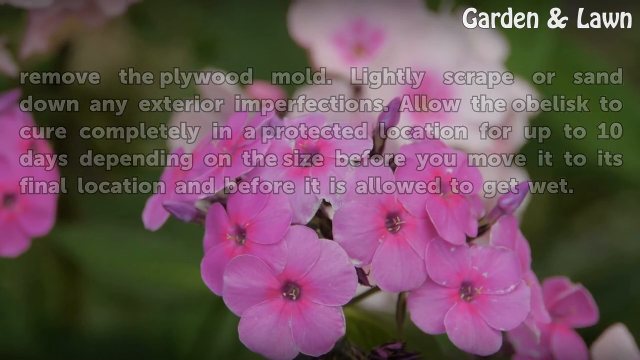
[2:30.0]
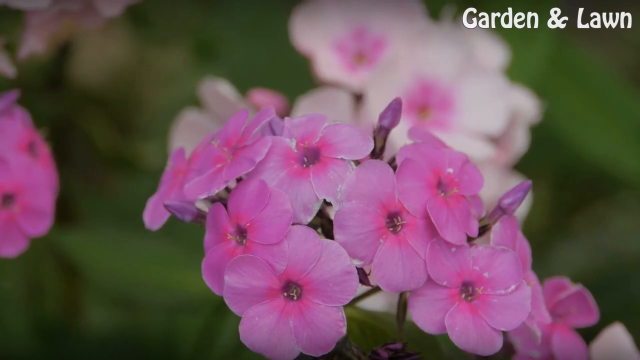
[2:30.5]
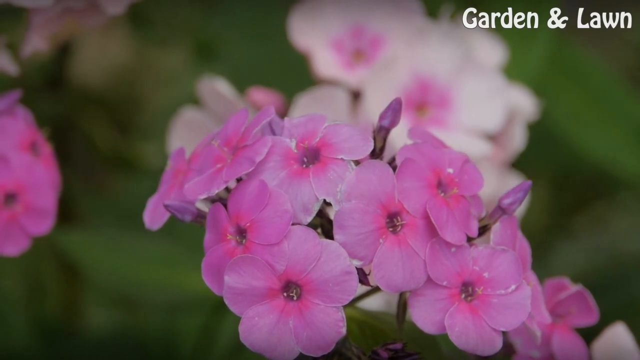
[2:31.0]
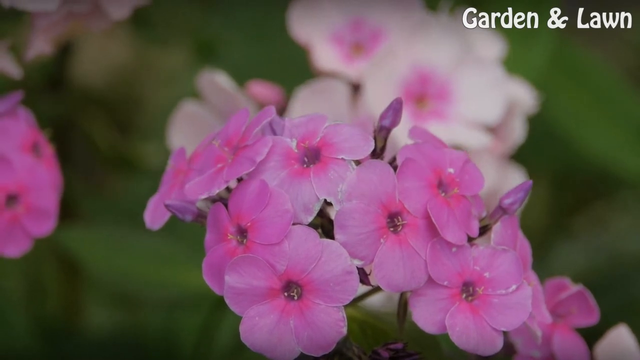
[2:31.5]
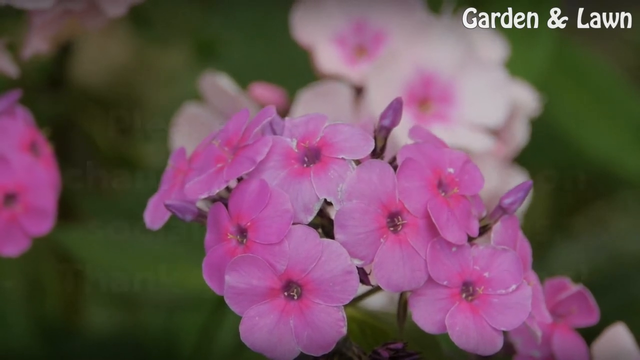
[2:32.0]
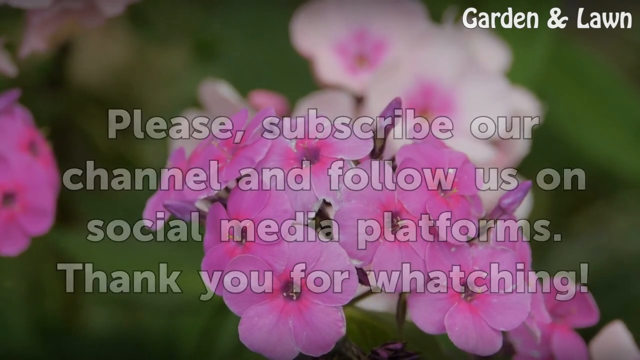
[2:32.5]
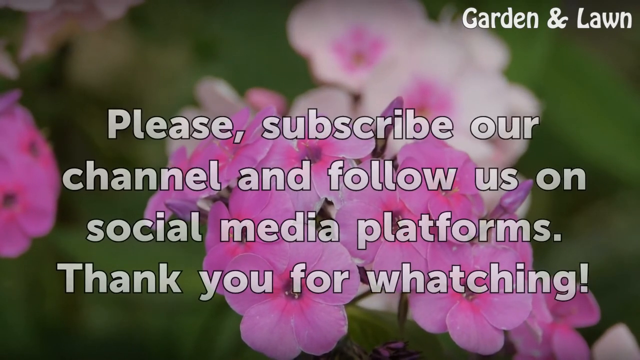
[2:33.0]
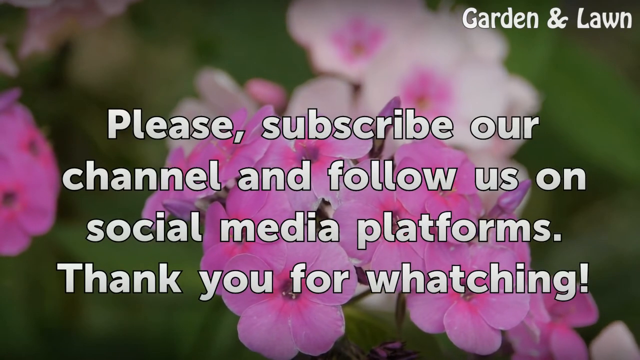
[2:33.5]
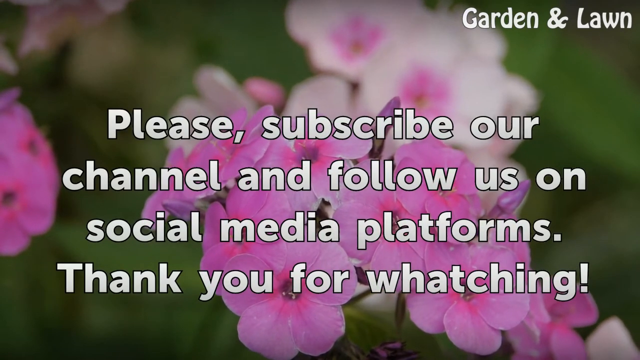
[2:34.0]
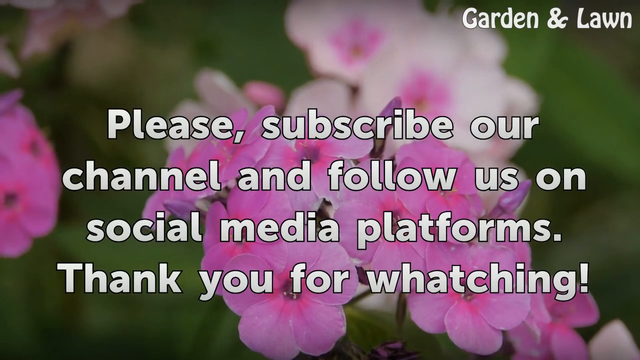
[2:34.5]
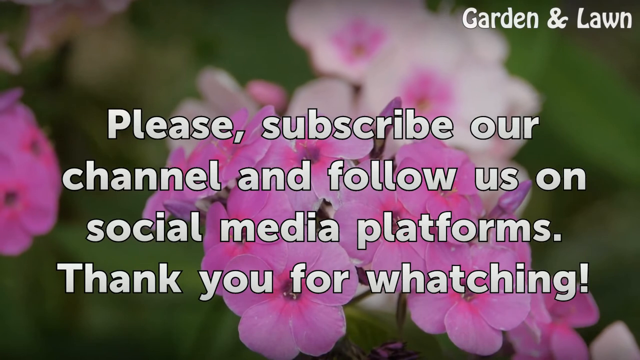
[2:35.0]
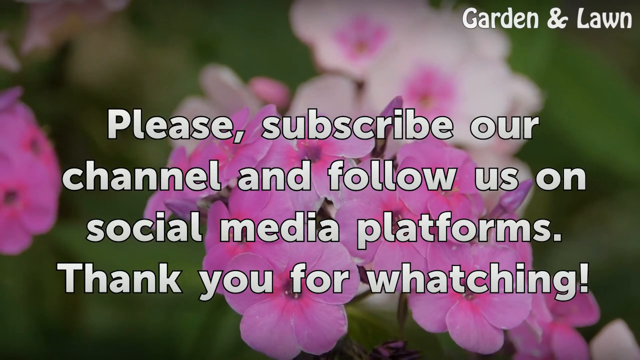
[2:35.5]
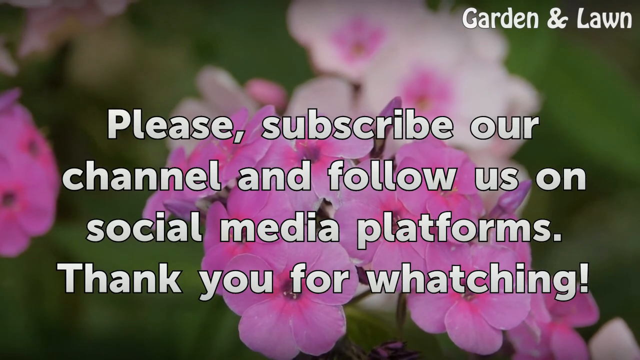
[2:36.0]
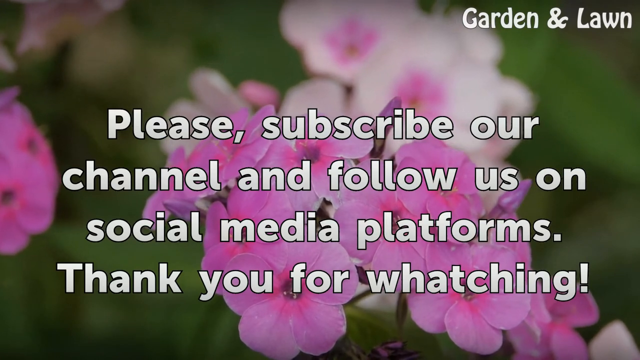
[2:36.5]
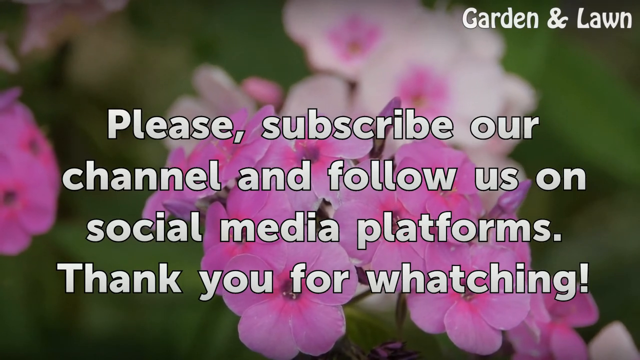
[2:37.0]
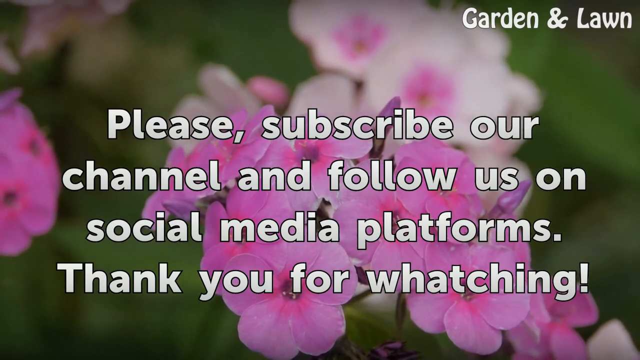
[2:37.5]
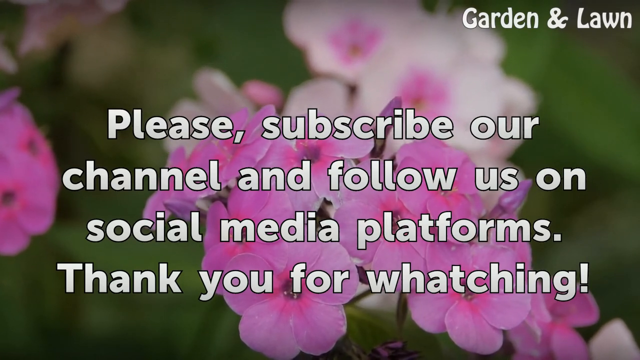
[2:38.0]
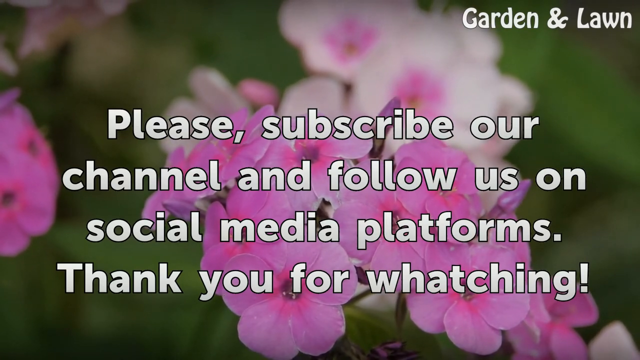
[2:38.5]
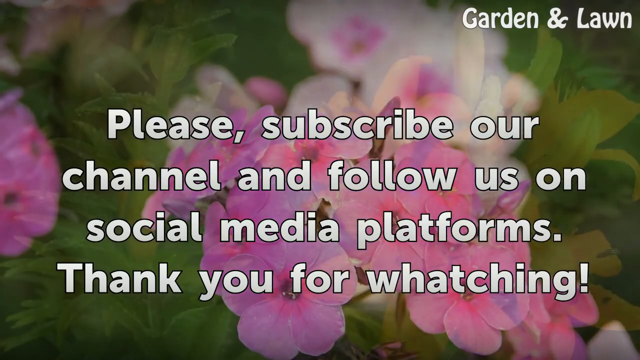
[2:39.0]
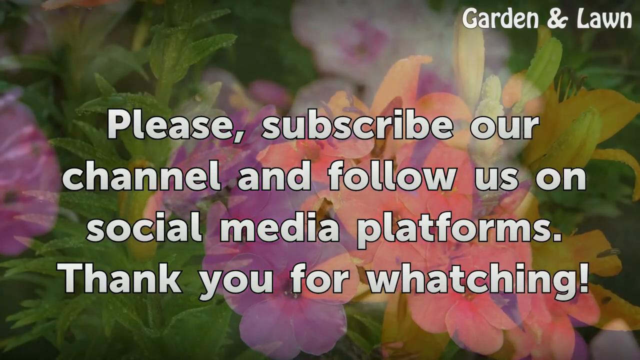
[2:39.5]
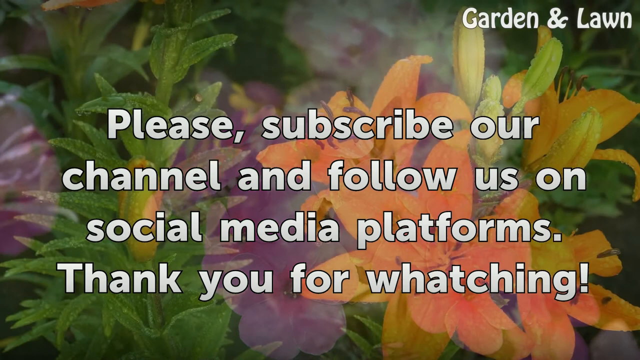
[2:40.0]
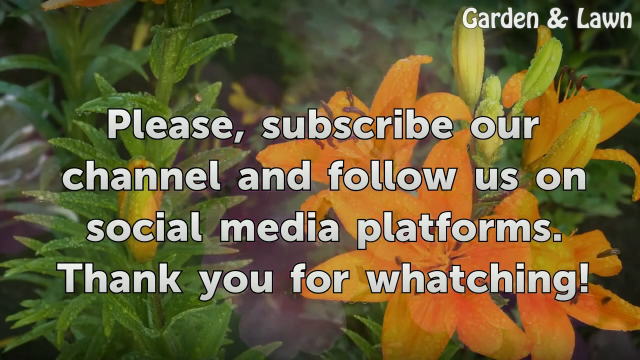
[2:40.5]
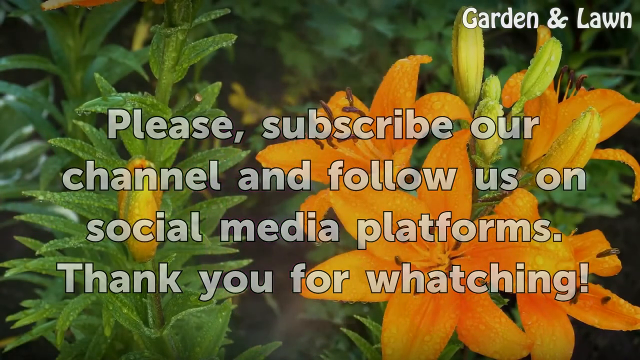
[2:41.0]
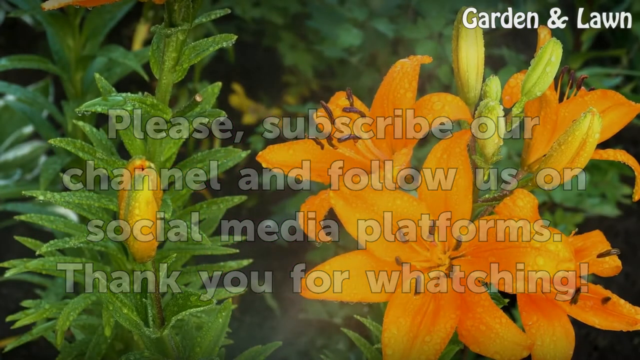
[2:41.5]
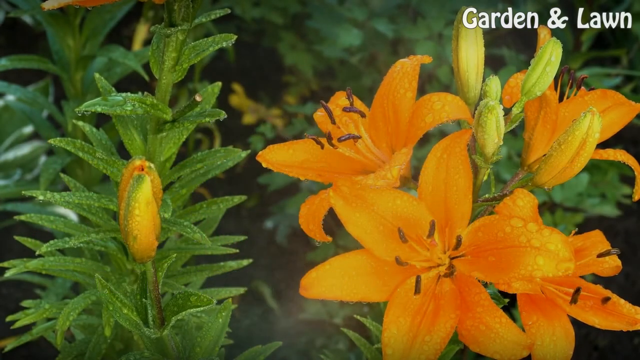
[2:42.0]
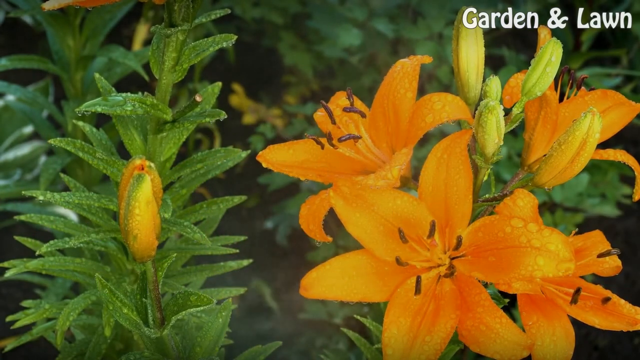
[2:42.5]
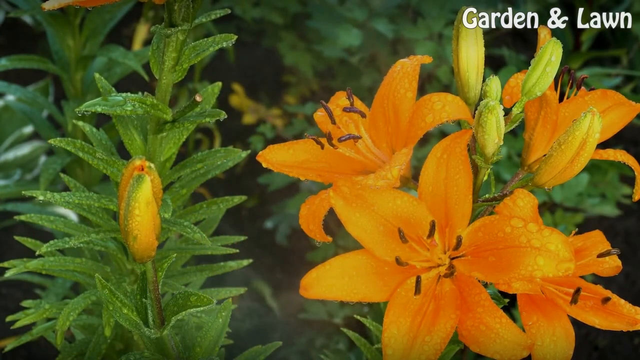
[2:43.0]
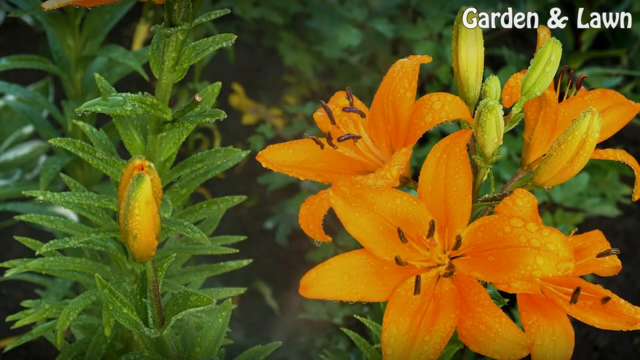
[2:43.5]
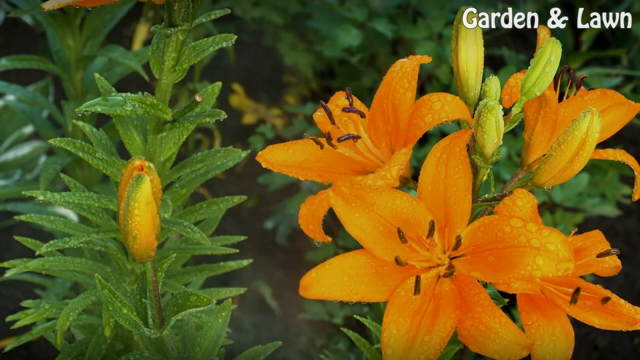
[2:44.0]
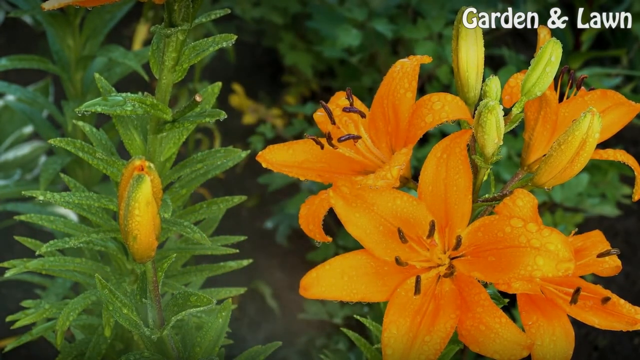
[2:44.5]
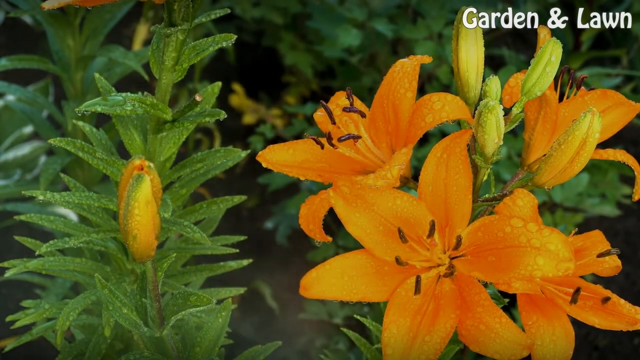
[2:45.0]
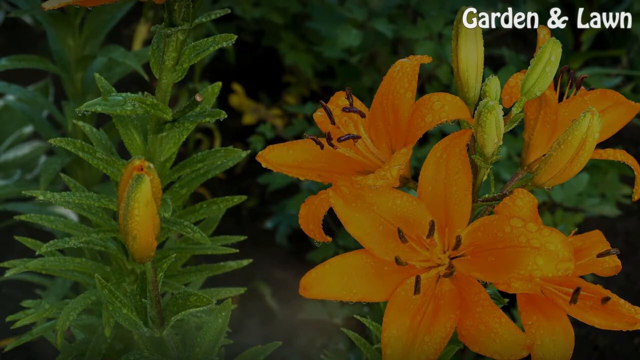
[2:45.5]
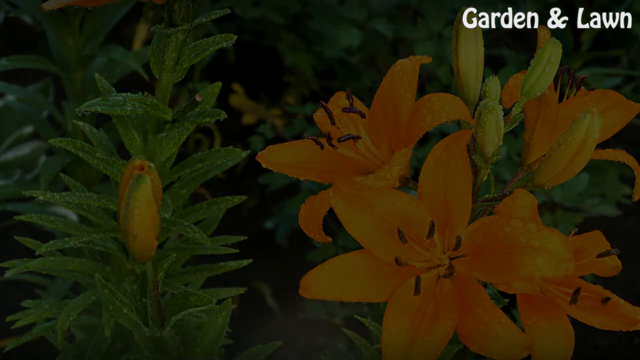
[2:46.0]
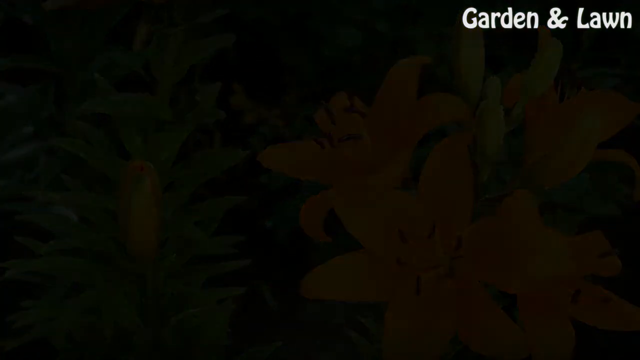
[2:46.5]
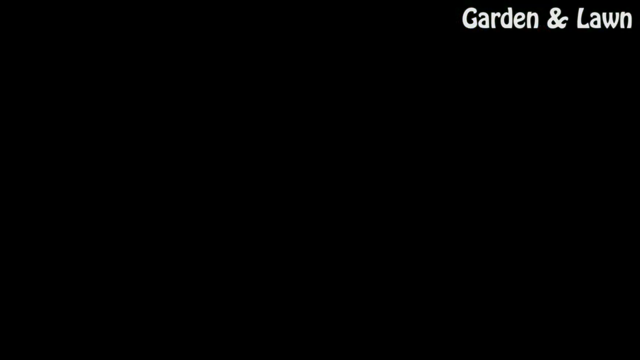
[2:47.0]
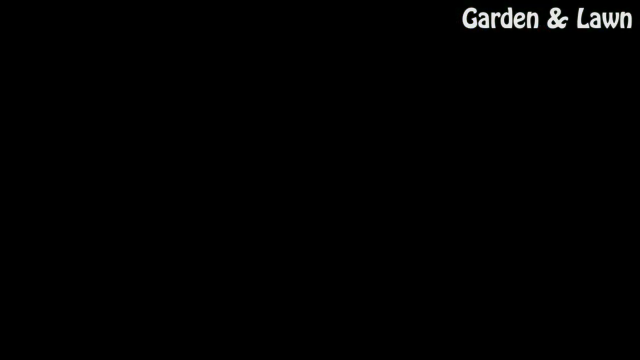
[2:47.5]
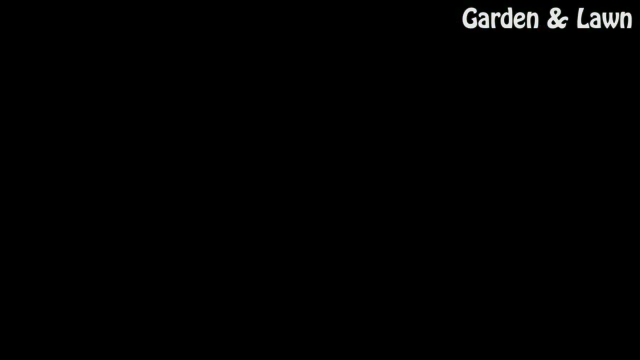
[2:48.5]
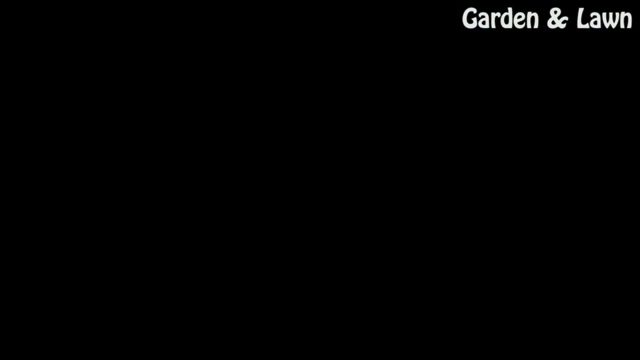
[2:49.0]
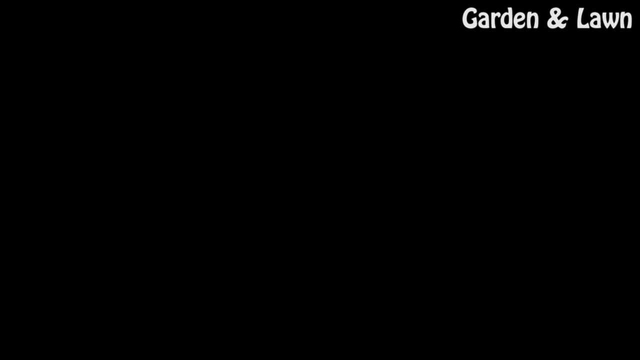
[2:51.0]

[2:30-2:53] A slightly moving background, as though a gentle breeze is passing, shows delicate pink flower petals over slightly out-of-focus white flowers. On the left side of the screen are more pink flowers, and behind them is a heavily out-of-focus green backdrop of foliage, stems, and dark spaces, hinting at a view to ground level. The white text "Garden & Lawn" remains in the upper right corner. White text with a black outline appears in the center of the screen: "Please subscribe our channel and follow us on social media platforms. Thank you for watching." The text stays on screen as the background transitions to orange plants among light green, narrow, leafy foliage, with a vertical green plant on the left side of the screen and a bold cluster of orange on the right. The image then transitions to solid black for the last several seconds.